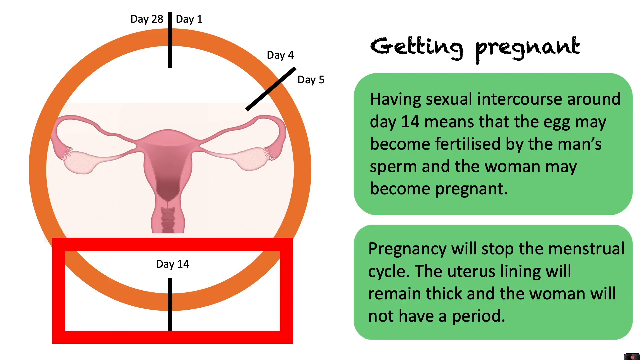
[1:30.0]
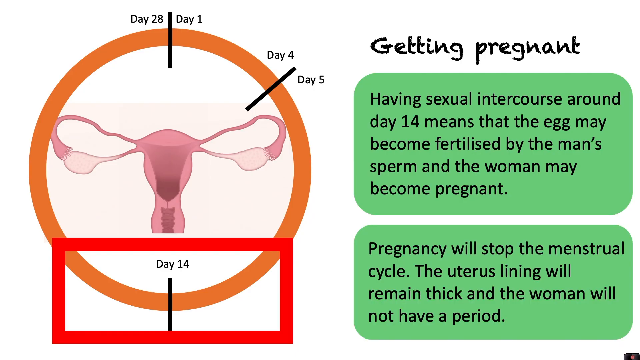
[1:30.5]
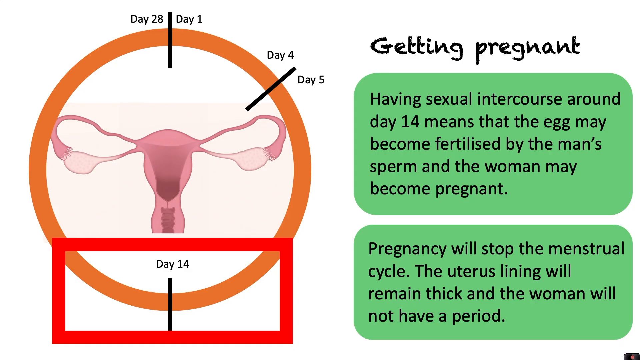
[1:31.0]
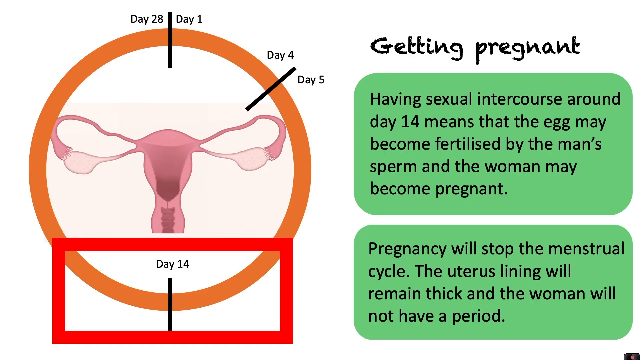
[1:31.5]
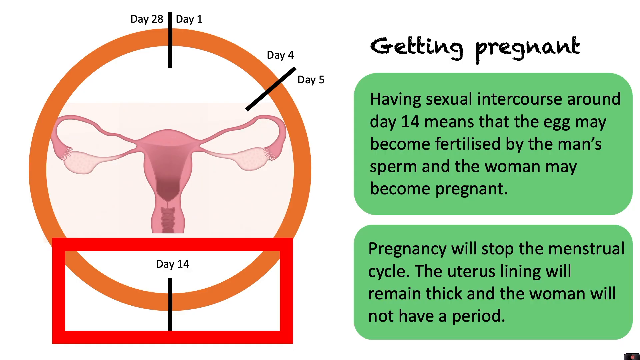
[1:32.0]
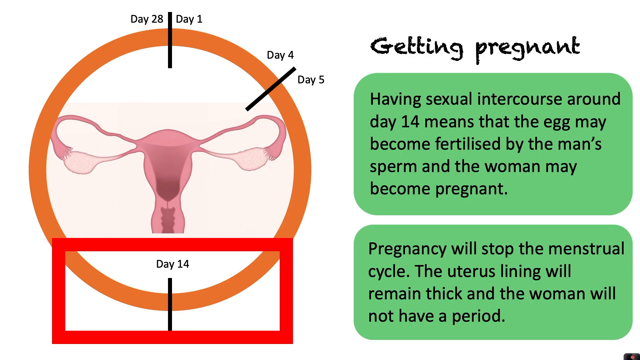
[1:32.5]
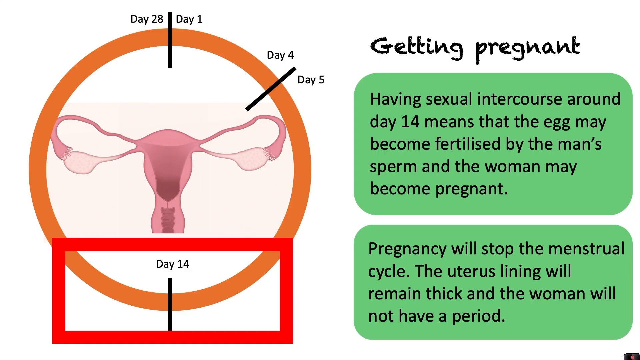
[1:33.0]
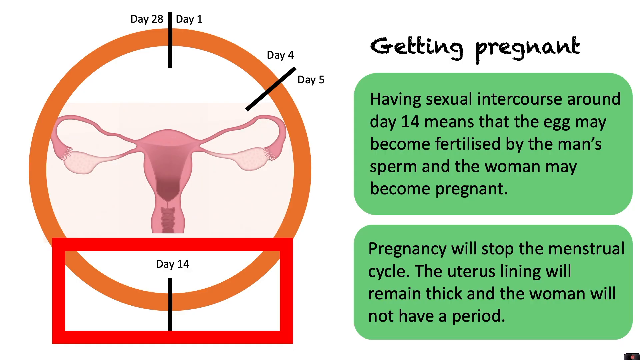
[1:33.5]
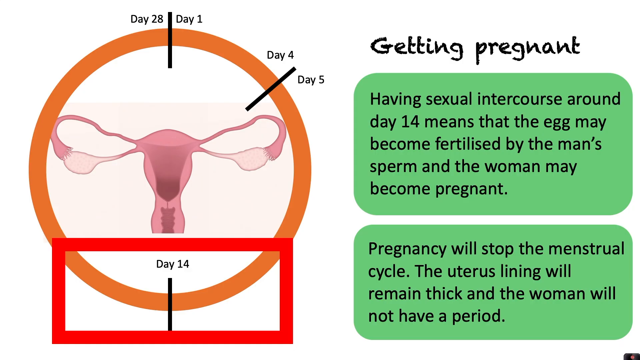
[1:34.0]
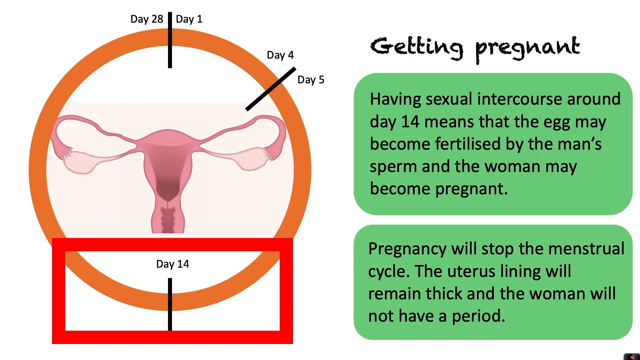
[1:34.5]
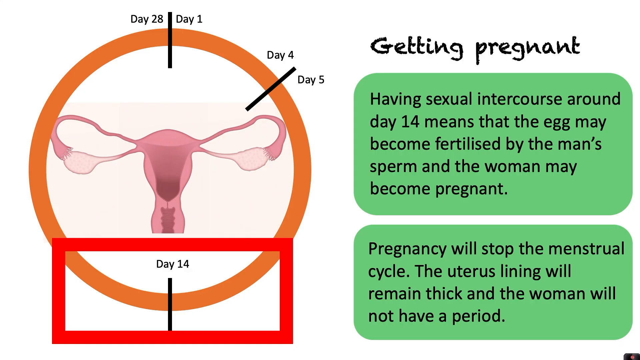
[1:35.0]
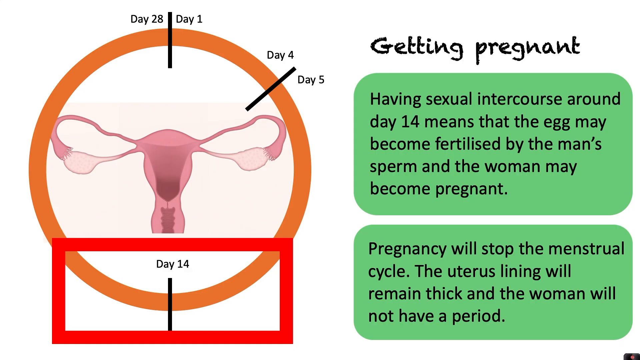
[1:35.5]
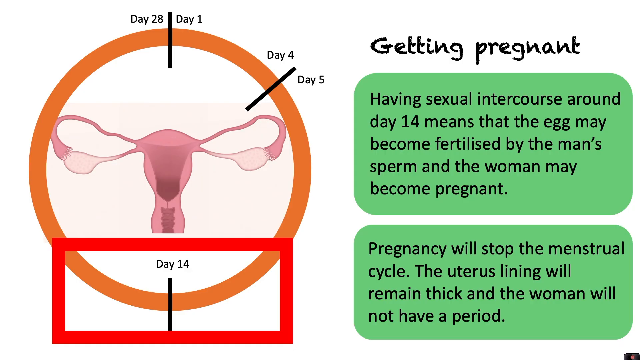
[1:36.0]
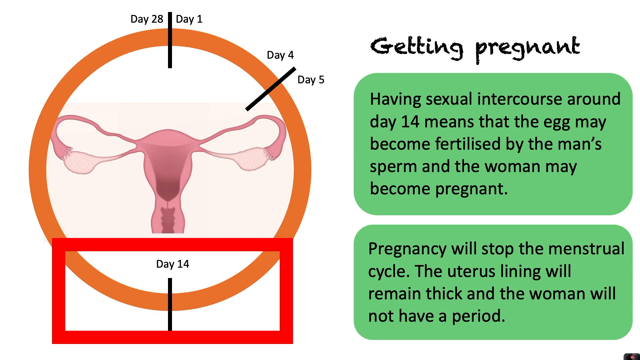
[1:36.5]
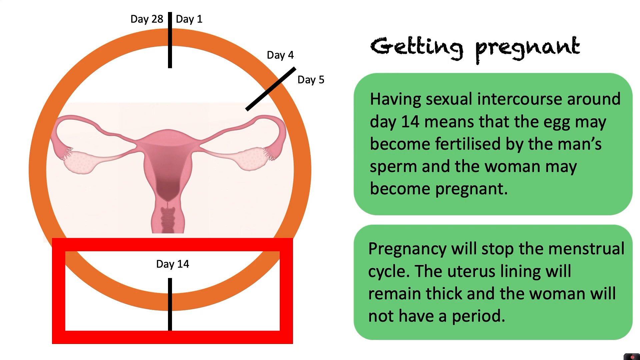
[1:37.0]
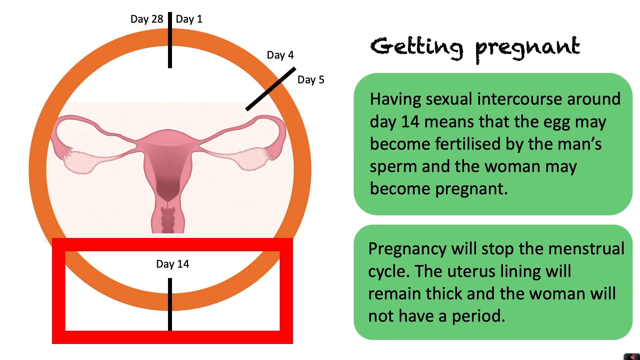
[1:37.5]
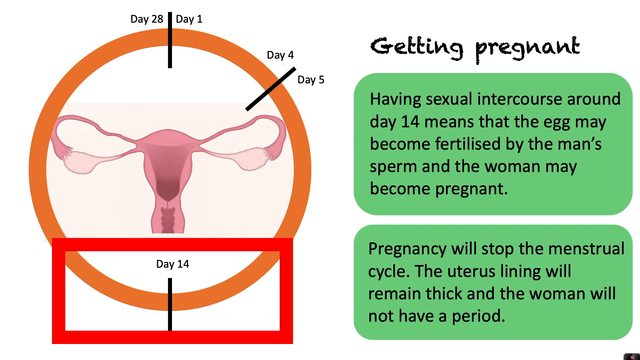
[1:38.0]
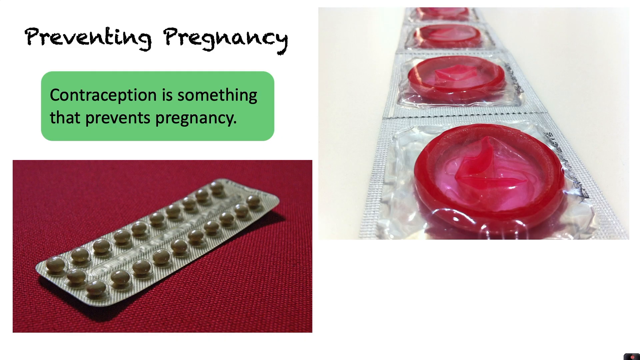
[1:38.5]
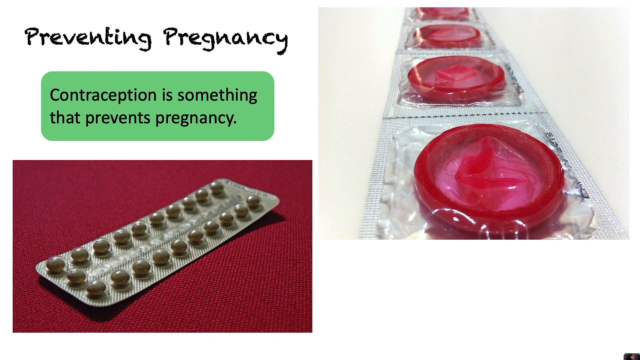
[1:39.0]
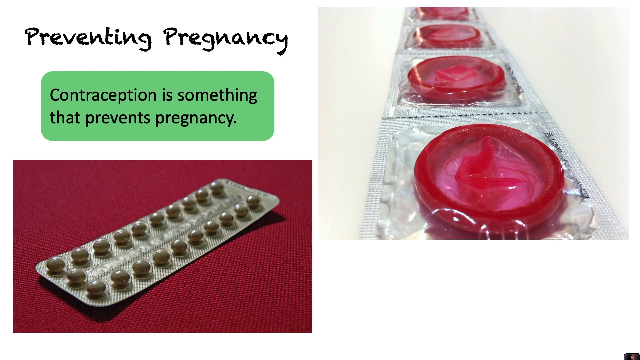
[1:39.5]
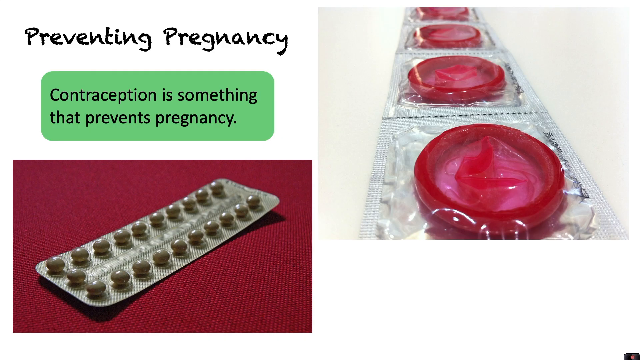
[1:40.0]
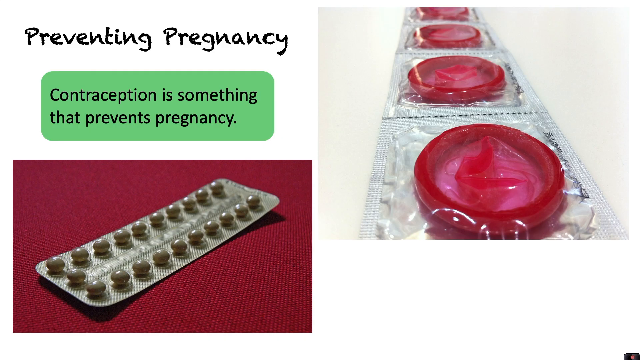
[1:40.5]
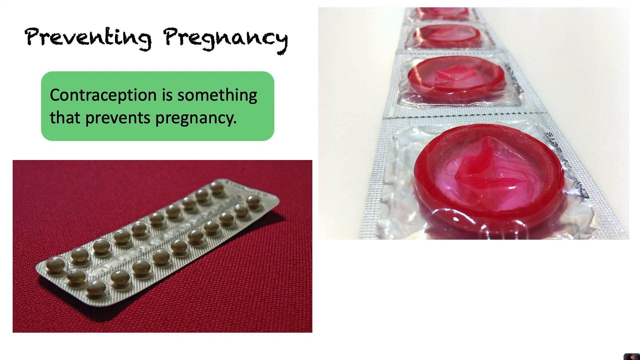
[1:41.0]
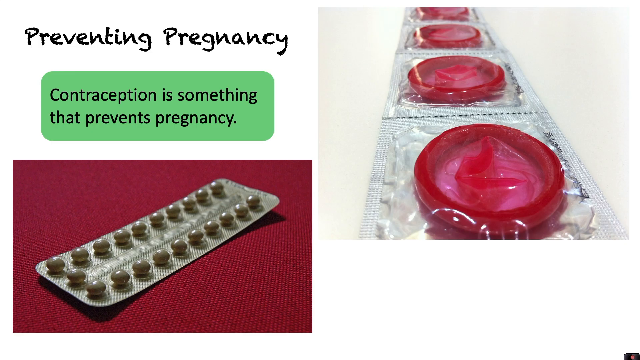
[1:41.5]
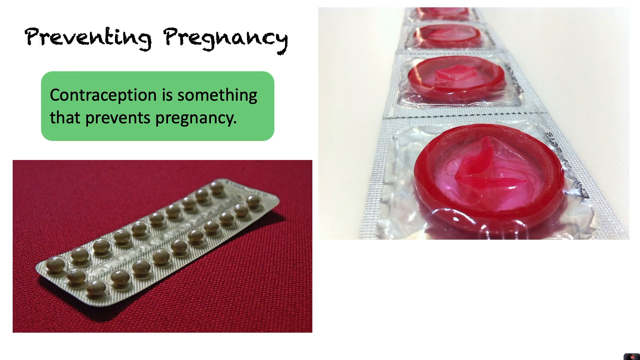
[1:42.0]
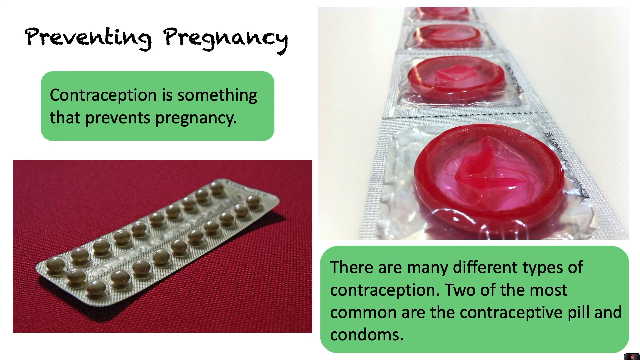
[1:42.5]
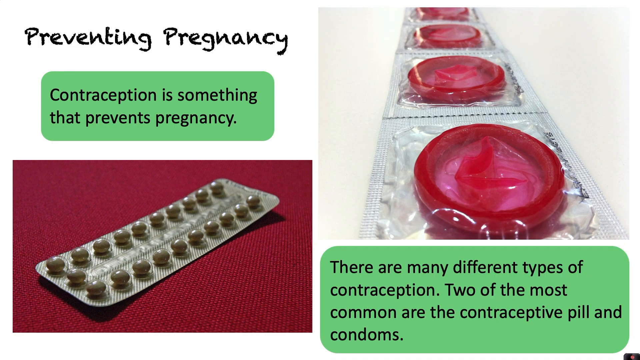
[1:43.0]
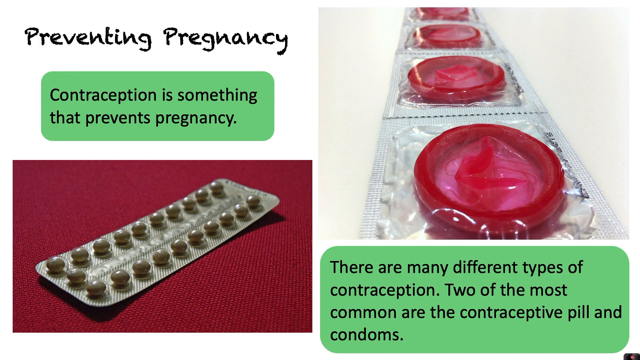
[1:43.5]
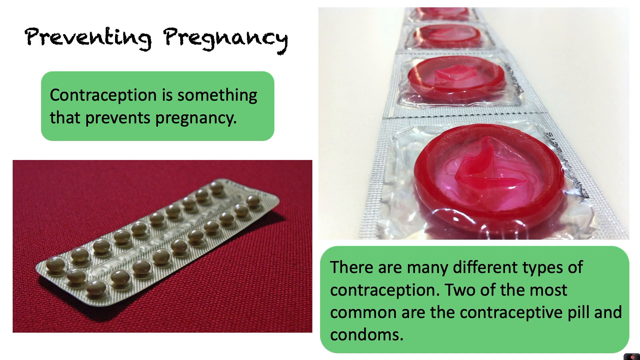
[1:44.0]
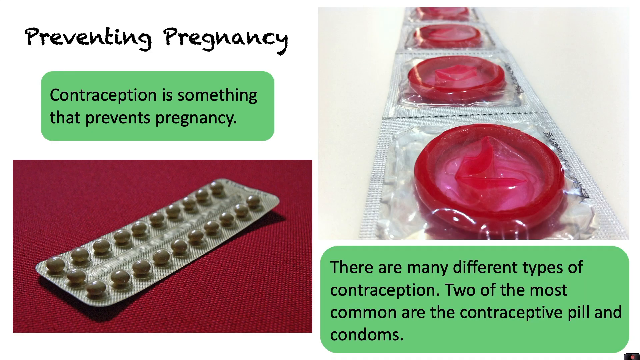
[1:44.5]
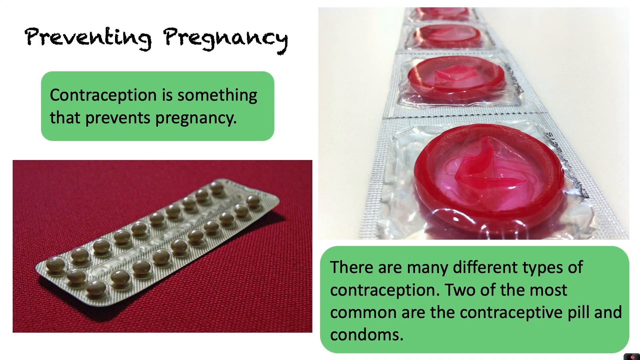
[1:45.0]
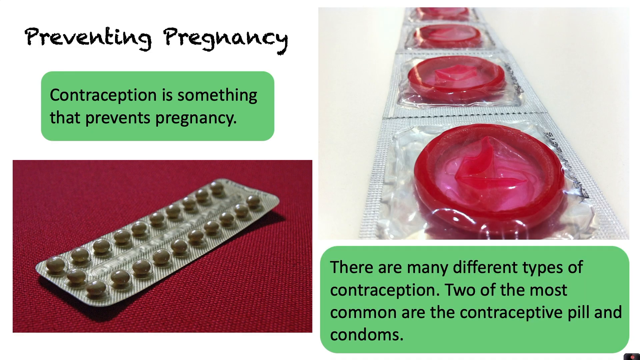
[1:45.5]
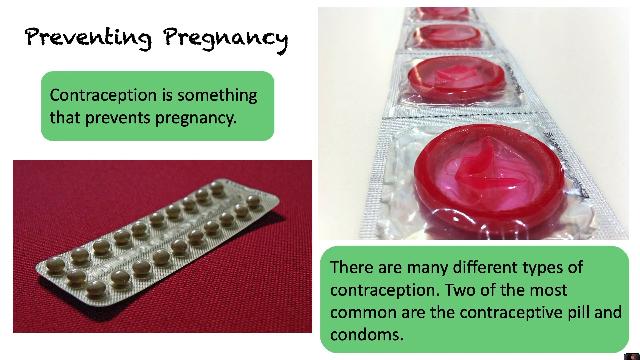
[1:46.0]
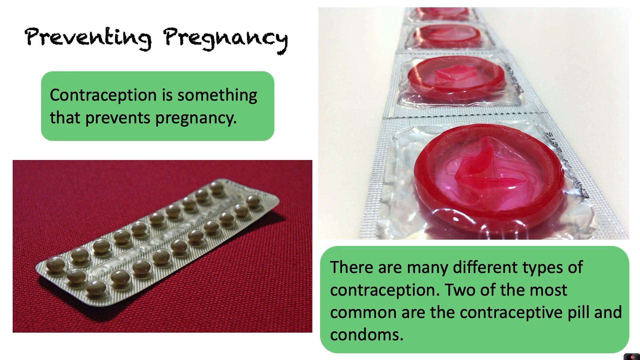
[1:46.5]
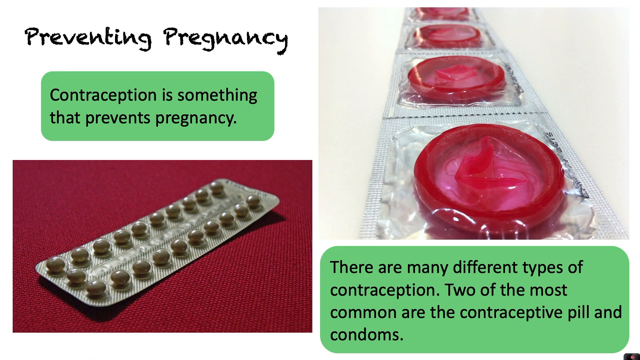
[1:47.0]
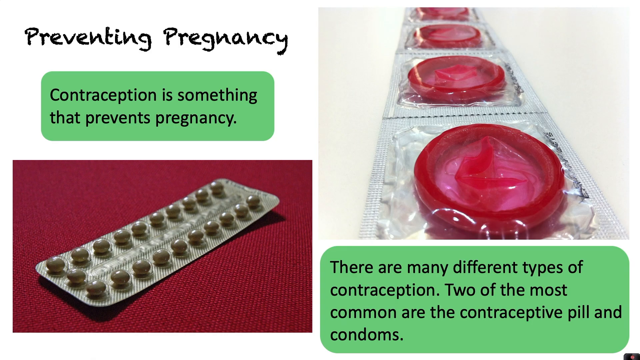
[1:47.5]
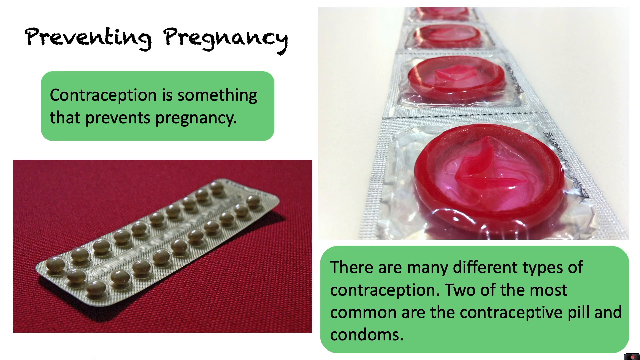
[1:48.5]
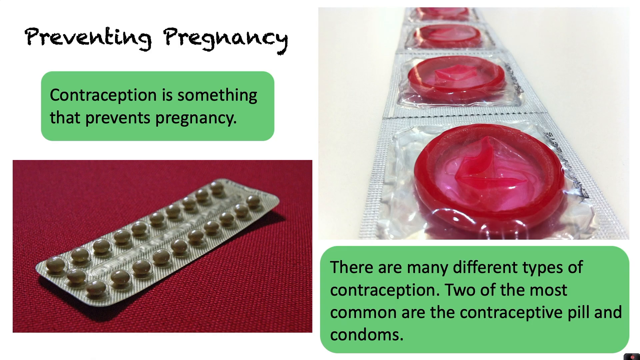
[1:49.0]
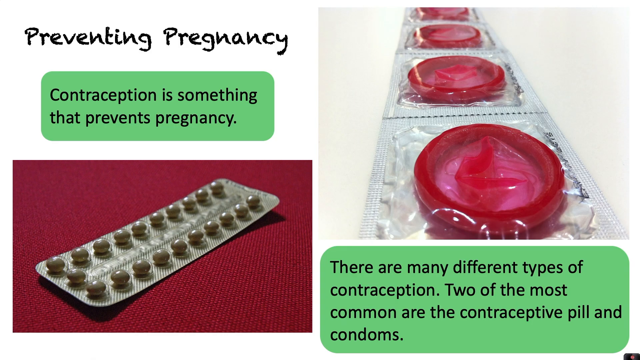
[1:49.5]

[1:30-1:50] A slide with a white background has a black heading at the top toward the right reading "Getting Pregnant." Below it, a green box with rounded corners contains black text reading "Having sexual intercourse around day 14 means that the egg may become fertilized by the man's sperm and the woman may become pregnant." Beneath that, another green box reads "pregnancy will stop the menstrual cycle. The uterus lining will remain thick and the woman will not have a period." On the left side of the screen is a diagram with an orange circle outline, a picture of a woman's reproductive system inside, and tick marks for day 28 and day 1 at the top, day 4 and day 5 where 2 o'clock would be, and day 14 where 6 o'clock would be. An outline of a red rectangular box overlaps the bottom of the circle. The next slide has a black heading in the top left corner reading "Preventing Pregnancy." Below it, a small green box contains black text reading "Contraception is something that prevents pregnancy." Beneath that is a large photo that appears to show some type of red surface with a long packet of round gray pills laying on top of it, possibly some type of birth control. On the right side is another photo that looks like a strip of red colored condoms in square silver packaging, with about four condoms connected on the strip. Then a green rectangular box pops up under that image with black text reading "There are many different types of contraception. Two of the most common are the contraceptive pill and condoms."